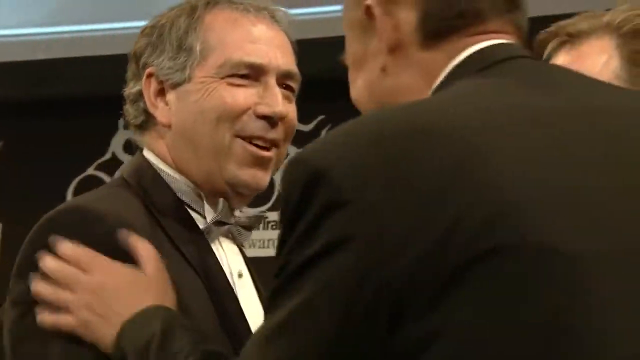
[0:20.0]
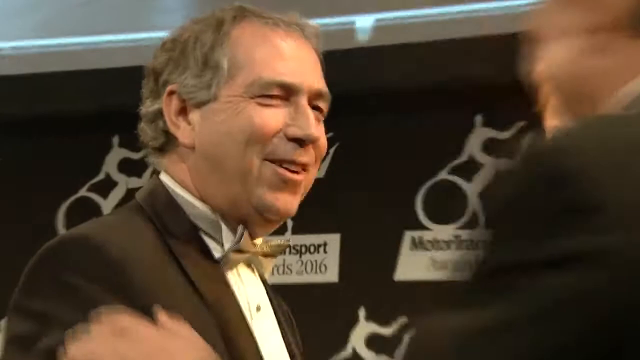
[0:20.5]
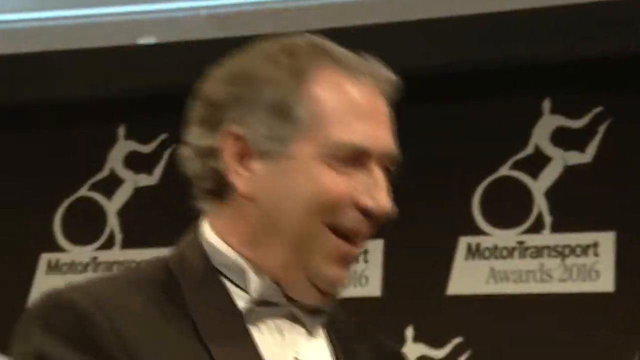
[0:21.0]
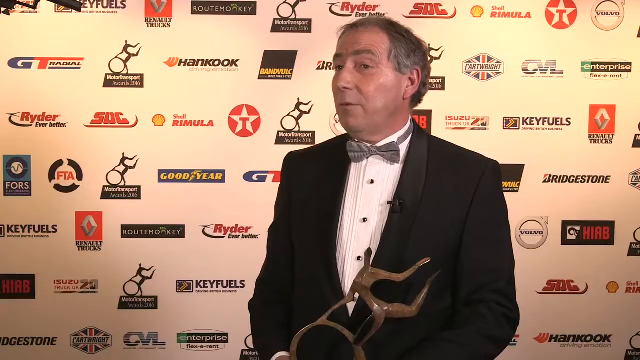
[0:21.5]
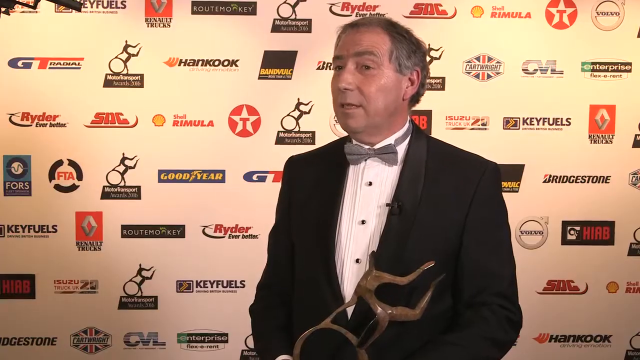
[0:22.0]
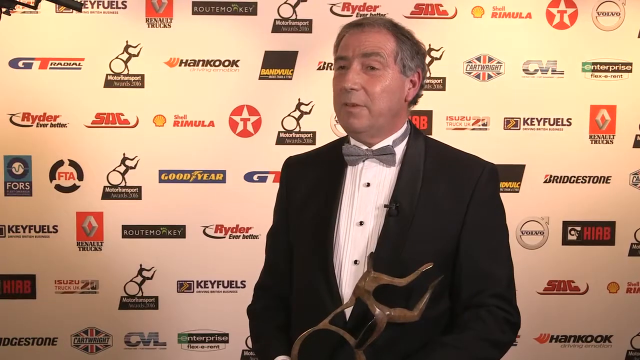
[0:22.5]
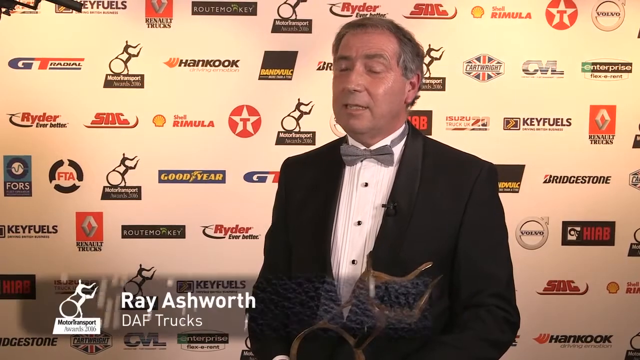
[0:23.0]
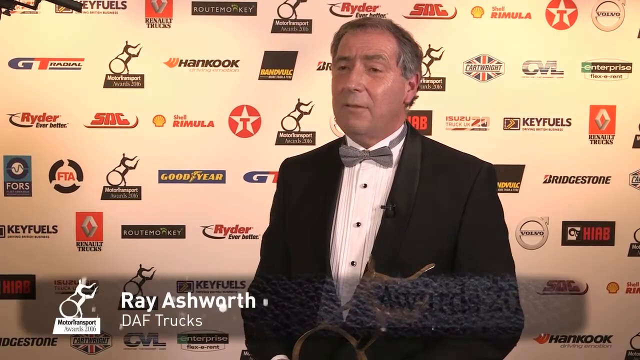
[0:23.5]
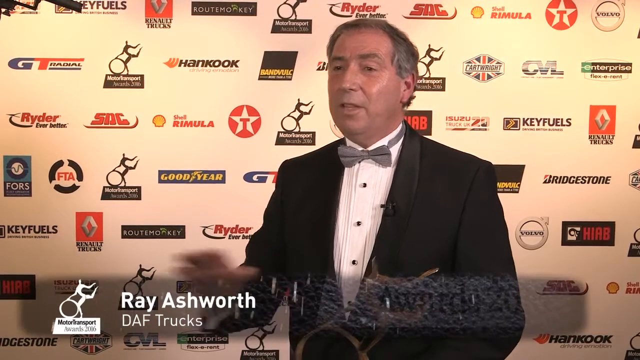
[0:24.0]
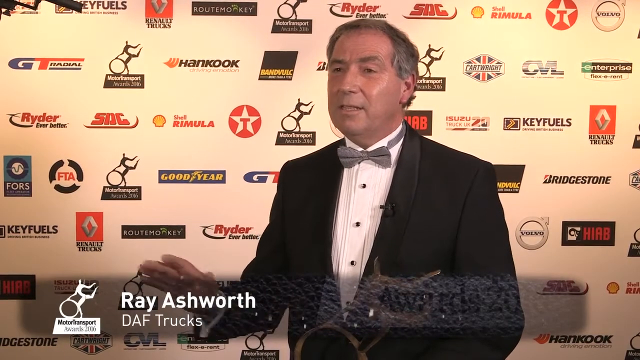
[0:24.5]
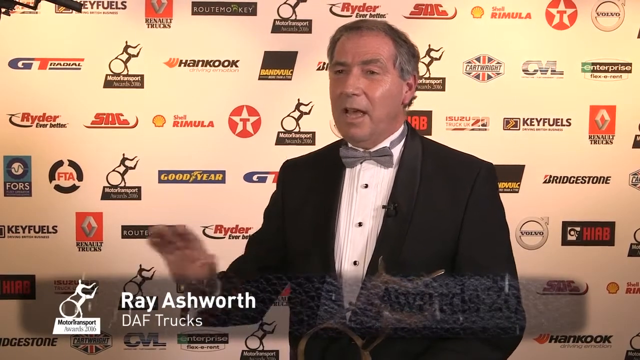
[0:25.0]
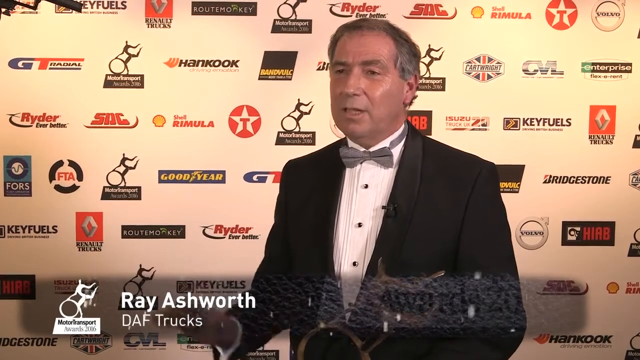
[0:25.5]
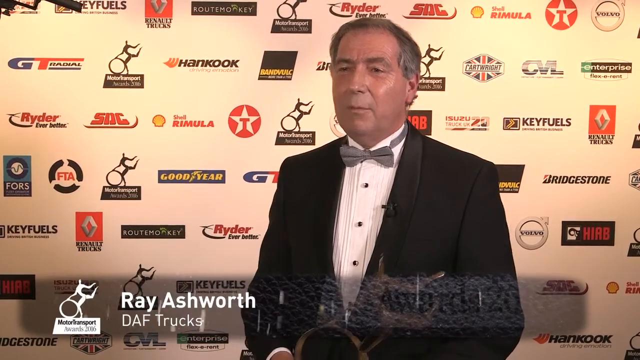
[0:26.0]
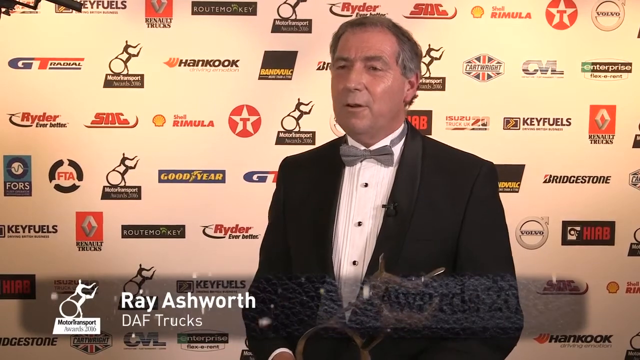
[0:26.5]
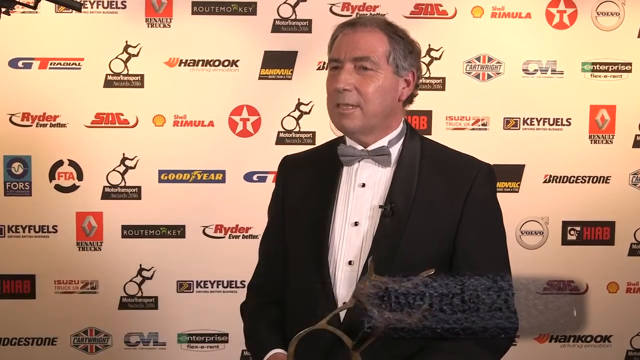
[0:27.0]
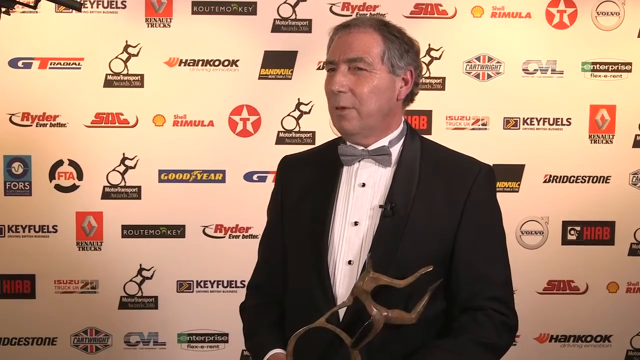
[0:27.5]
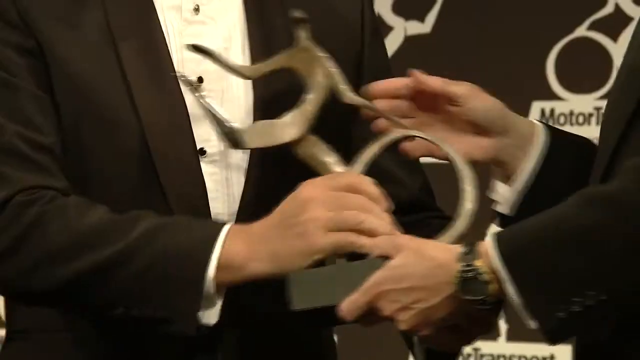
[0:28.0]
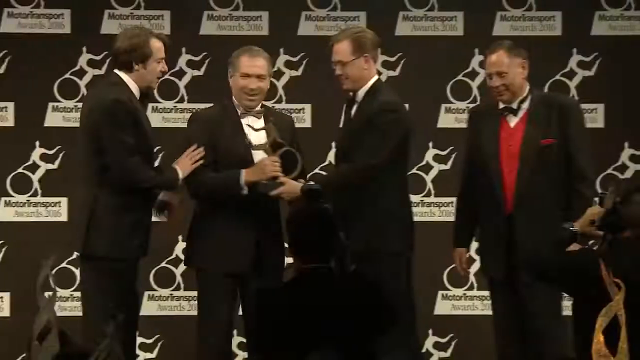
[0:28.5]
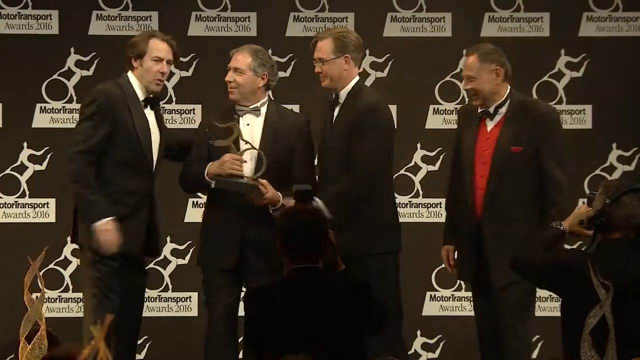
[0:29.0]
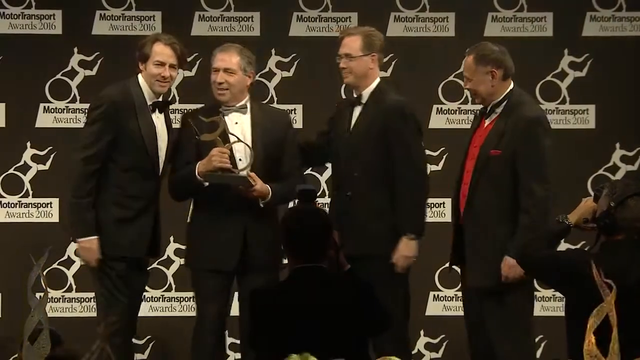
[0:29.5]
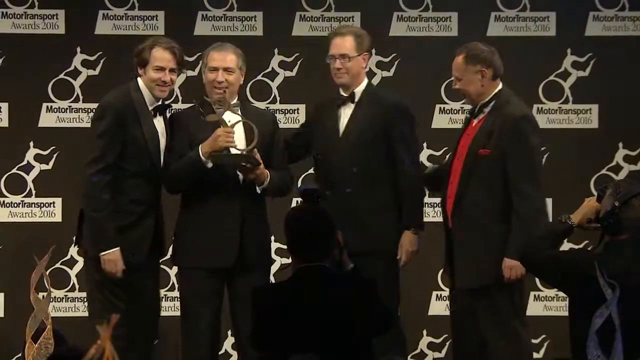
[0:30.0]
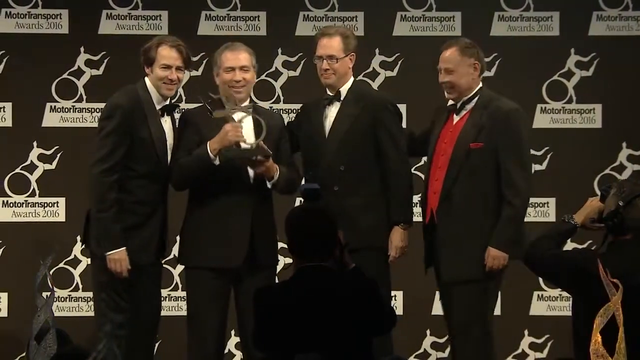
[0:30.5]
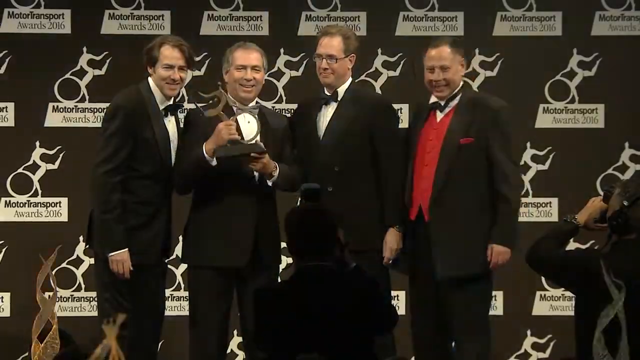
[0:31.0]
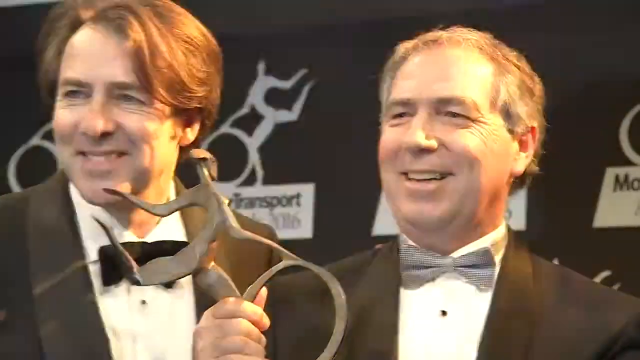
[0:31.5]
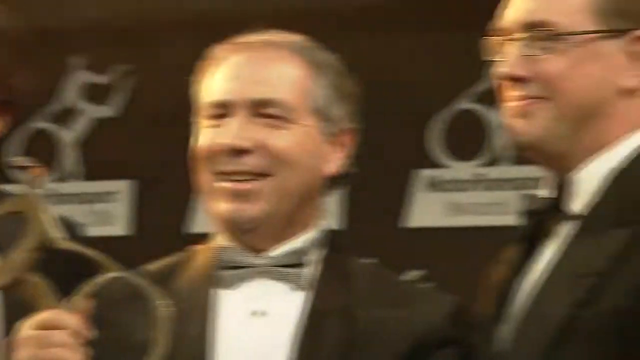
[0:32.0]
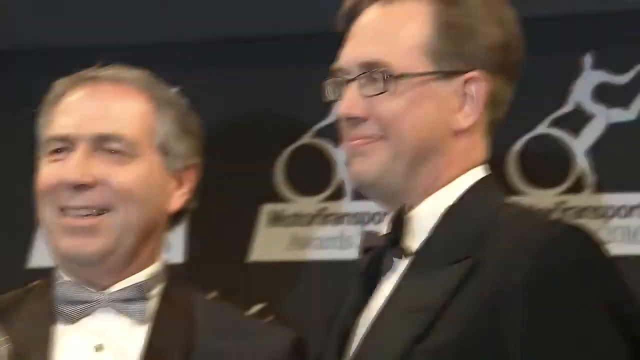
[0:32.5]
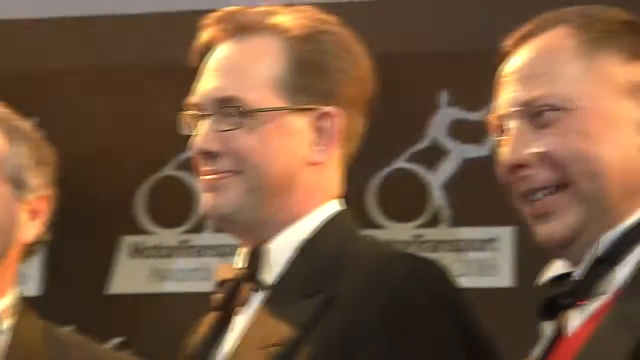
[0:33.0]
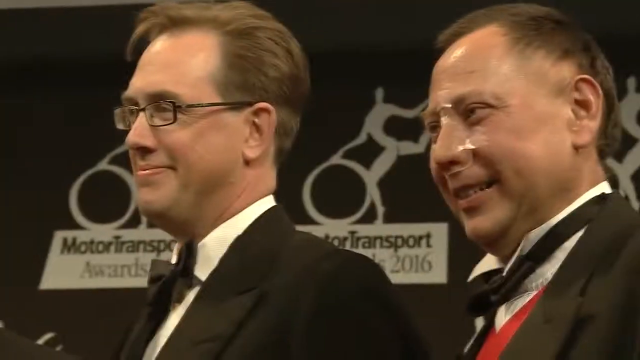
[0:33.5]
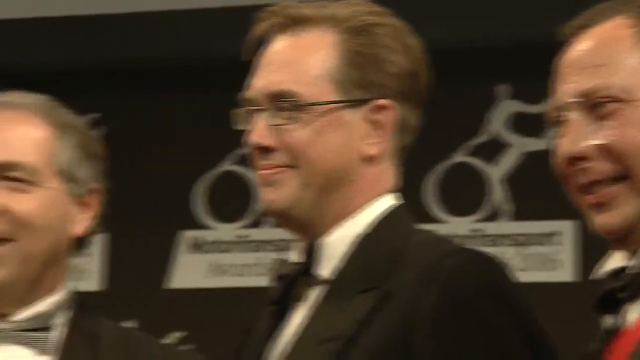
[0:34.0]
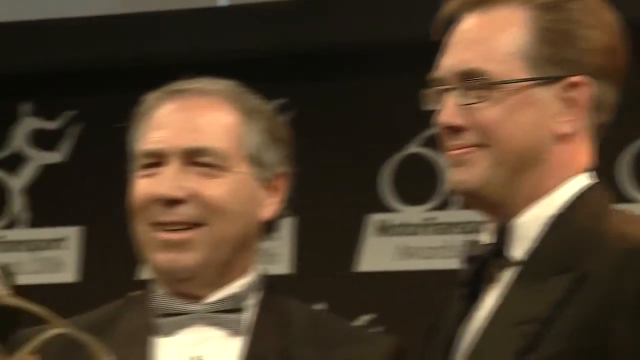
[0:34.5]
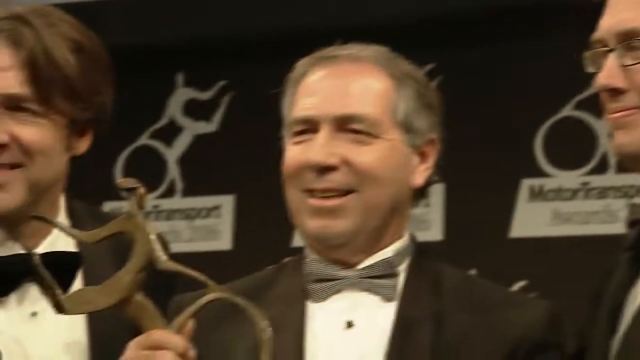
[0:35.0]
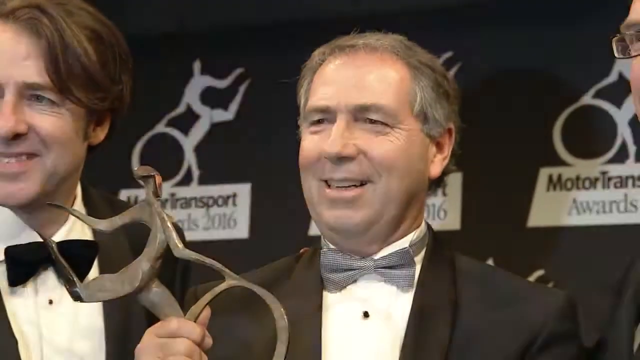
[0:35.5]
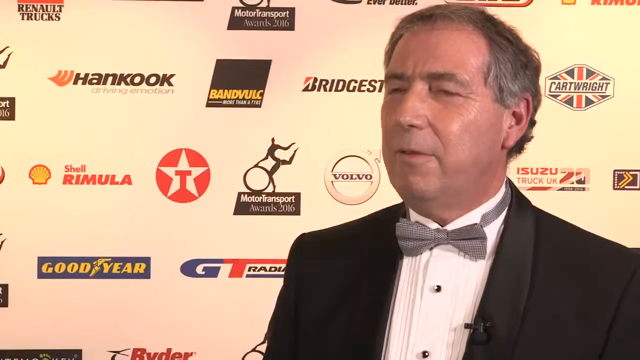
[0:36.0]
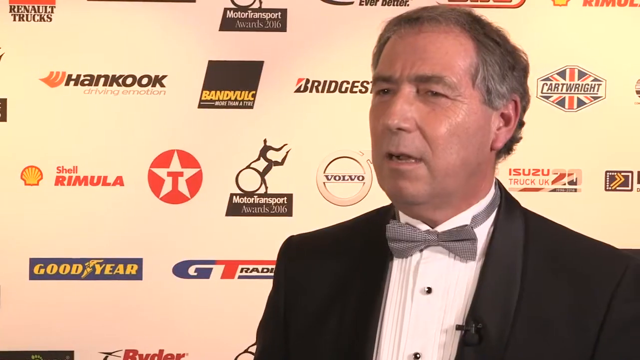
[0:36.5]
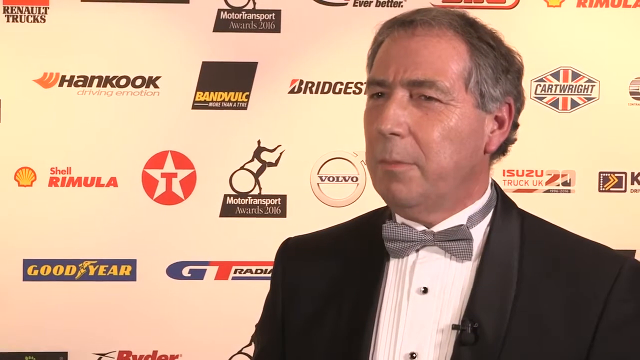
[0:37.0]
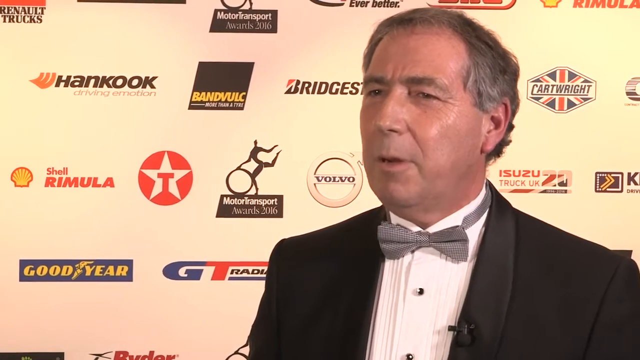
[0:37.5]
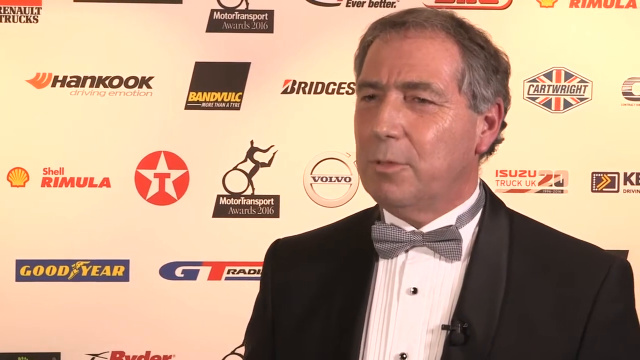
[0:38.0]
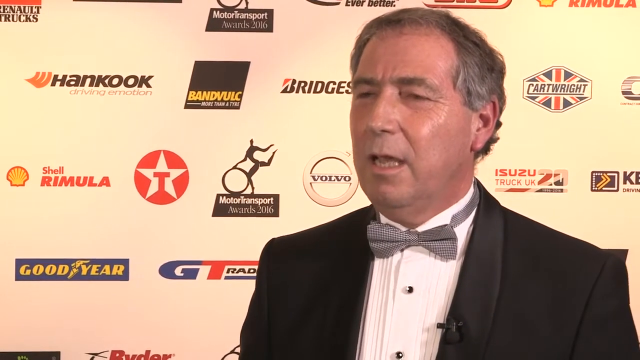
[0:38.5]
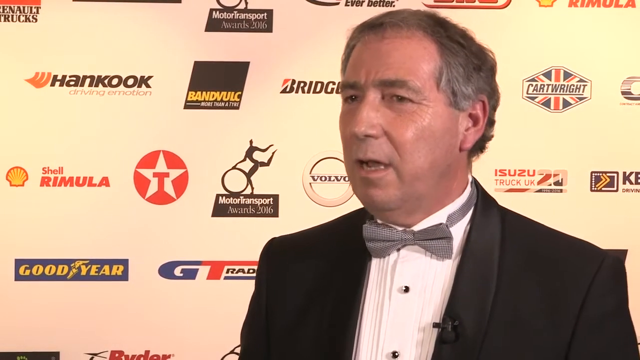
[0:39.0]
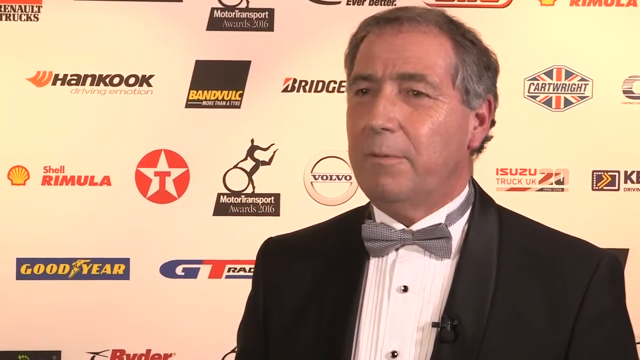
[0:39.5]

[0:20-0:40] The man in the black tuxedo and gray bowtie continues shaking hands as he receives an award of sorts. The scene moves to a shot where he is introduced with wording at the bottom of the screen: "Ray Ashworth, BAF Trucks". He stands in front of what appears to be a group of reporters, before a backdrop covered with a number of sponsors, mostly car and fuel names such as Shell, Texaco, Volvo, Bridgestone, Goodyear and Key Fuels. The video switches back to the stage, where there are now four men. Ray receives the award, and all four men on the stage stop to pose for a picture. The video then goes back to the press meeting, where Ray stands in front of the sponsor backdrop again.